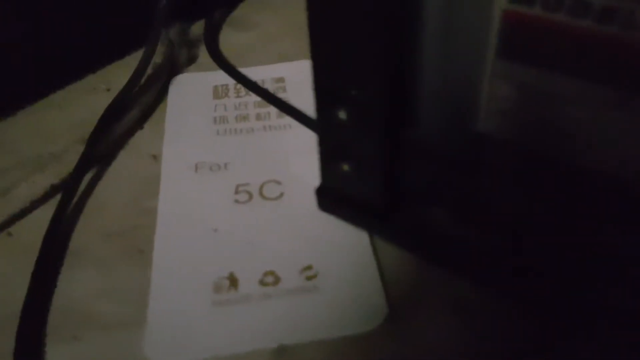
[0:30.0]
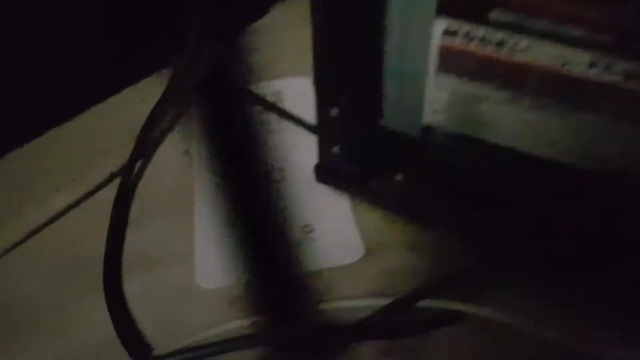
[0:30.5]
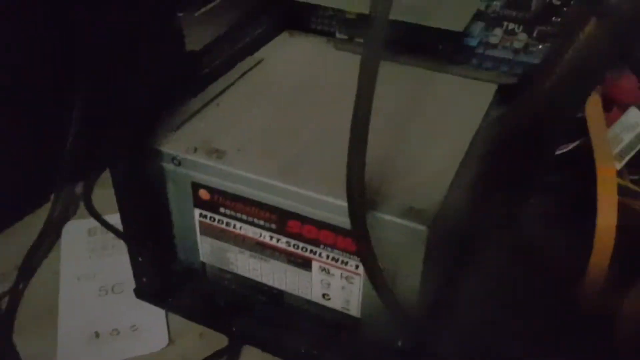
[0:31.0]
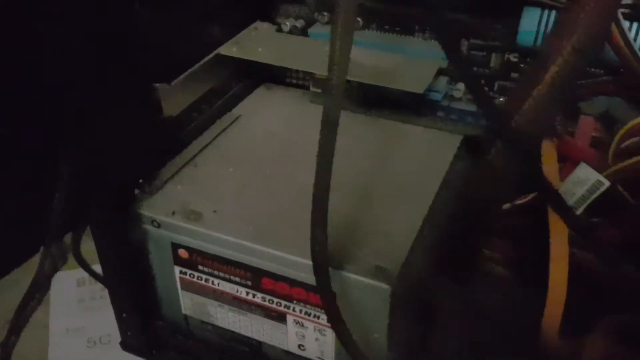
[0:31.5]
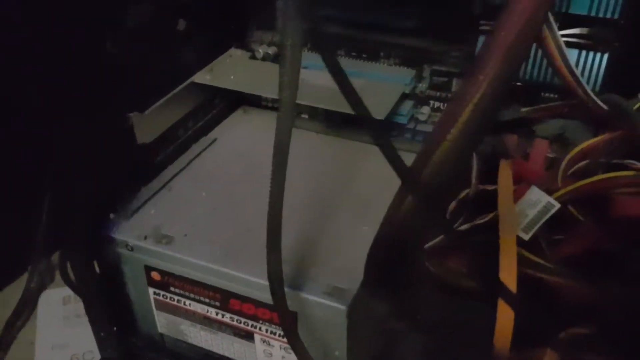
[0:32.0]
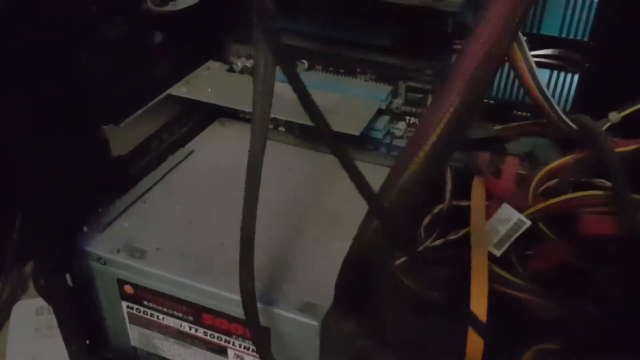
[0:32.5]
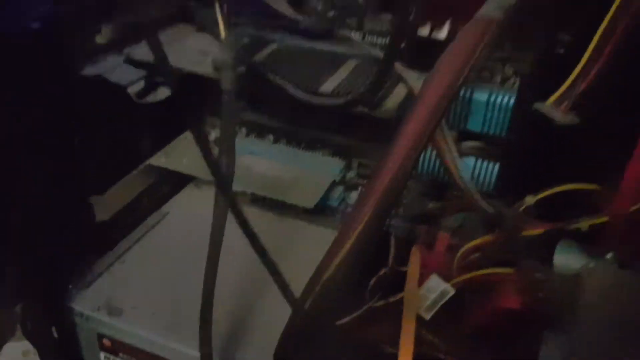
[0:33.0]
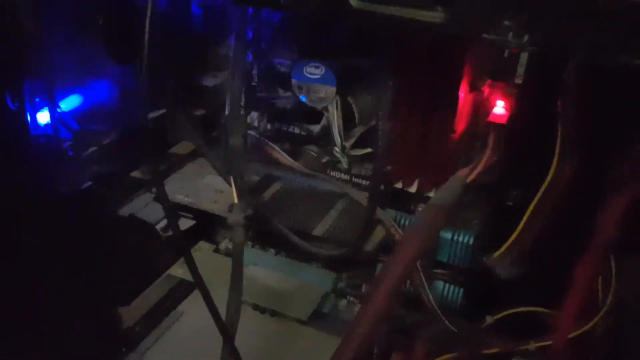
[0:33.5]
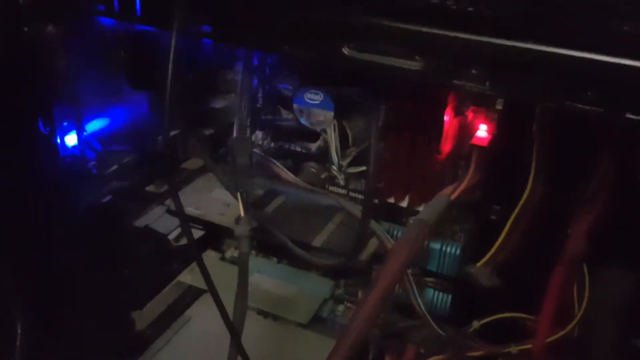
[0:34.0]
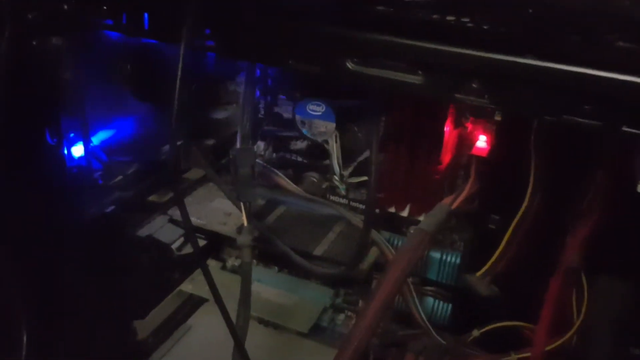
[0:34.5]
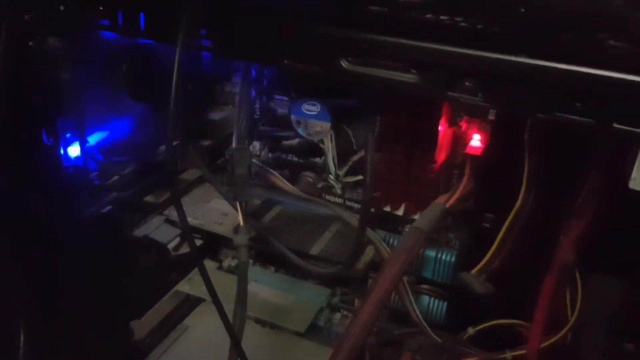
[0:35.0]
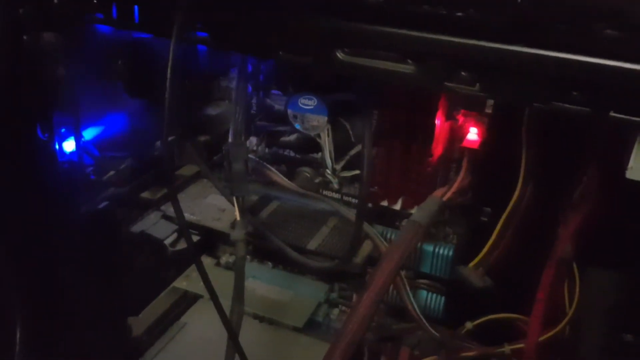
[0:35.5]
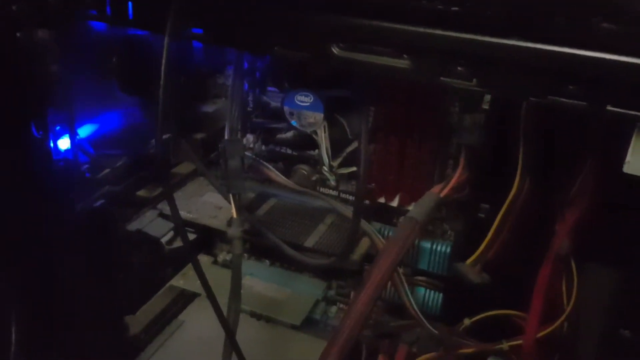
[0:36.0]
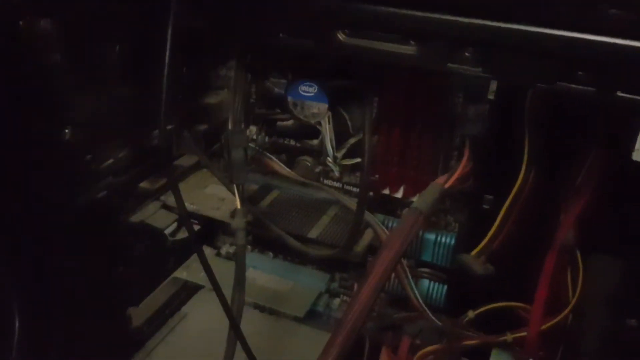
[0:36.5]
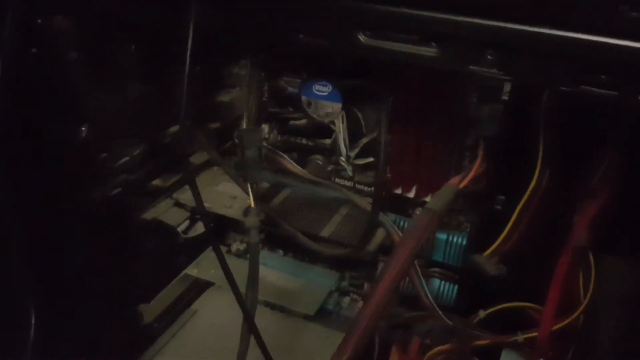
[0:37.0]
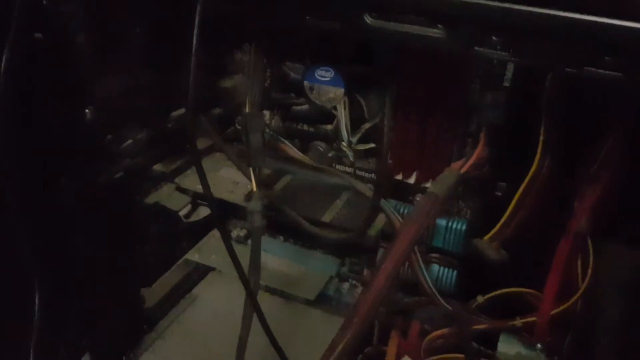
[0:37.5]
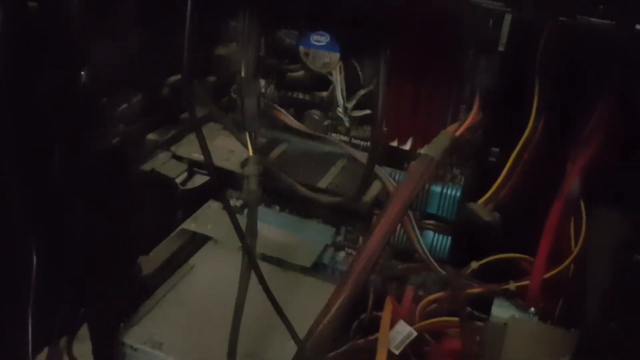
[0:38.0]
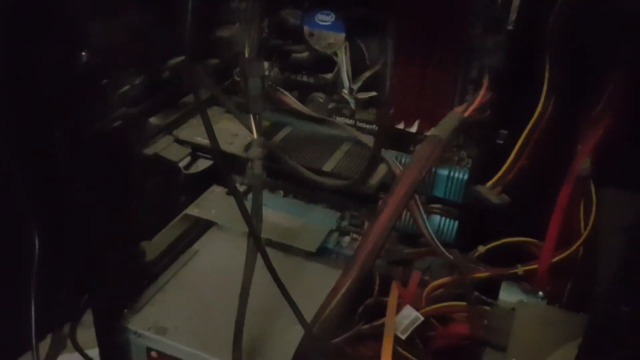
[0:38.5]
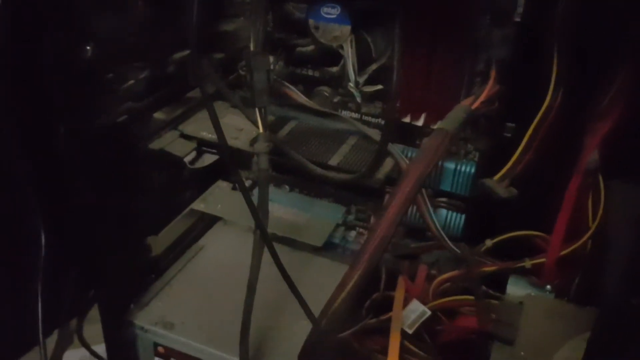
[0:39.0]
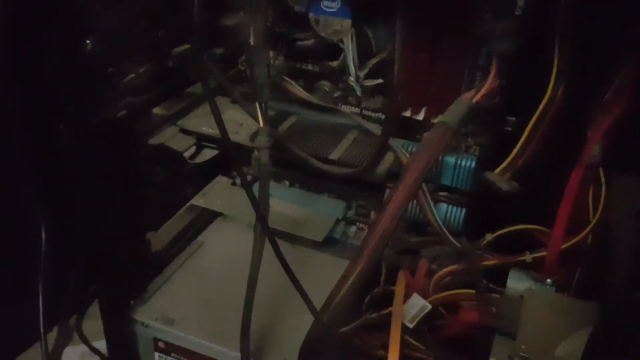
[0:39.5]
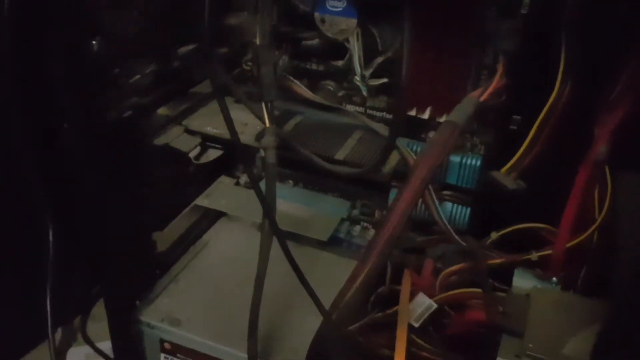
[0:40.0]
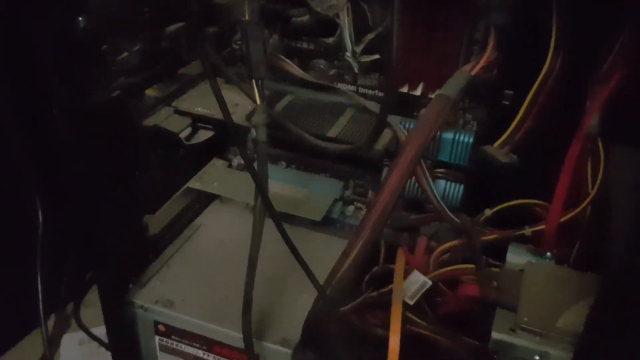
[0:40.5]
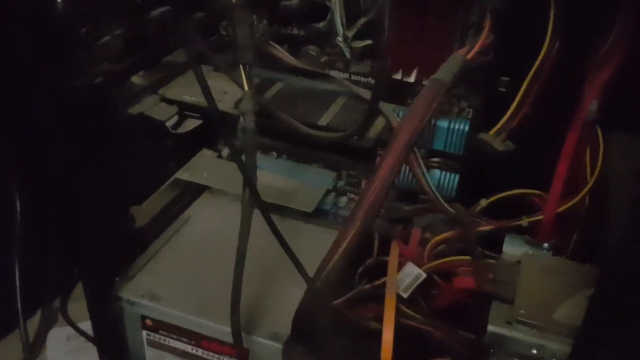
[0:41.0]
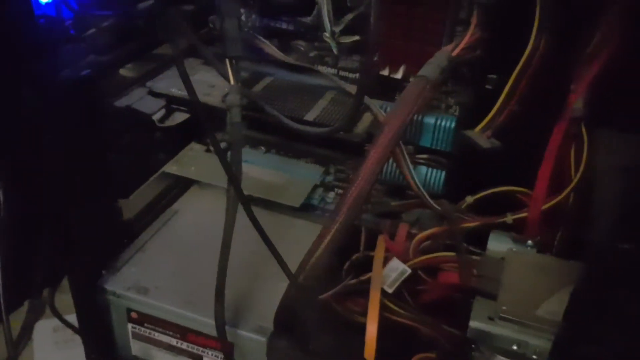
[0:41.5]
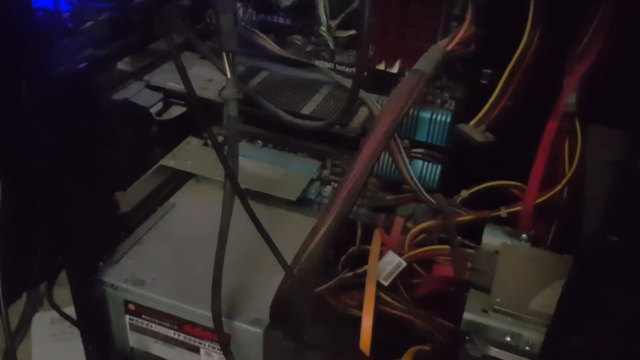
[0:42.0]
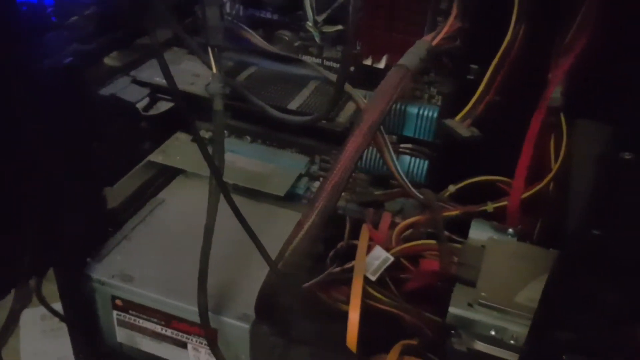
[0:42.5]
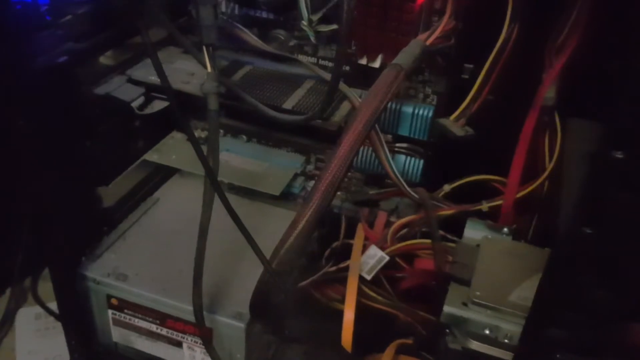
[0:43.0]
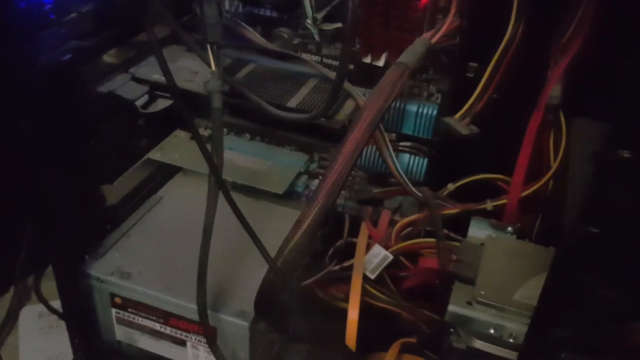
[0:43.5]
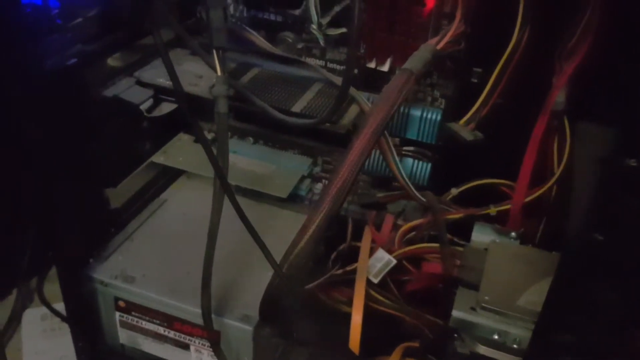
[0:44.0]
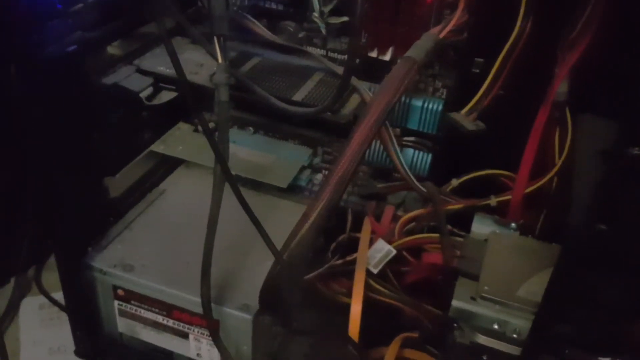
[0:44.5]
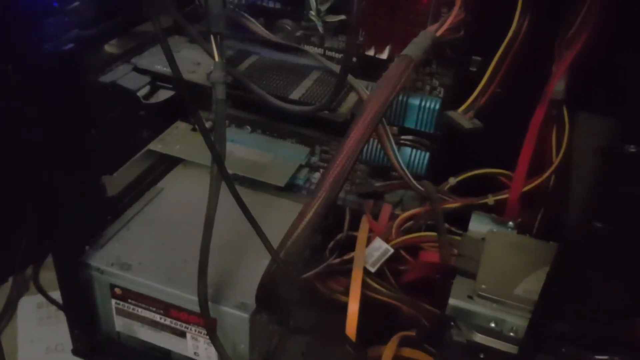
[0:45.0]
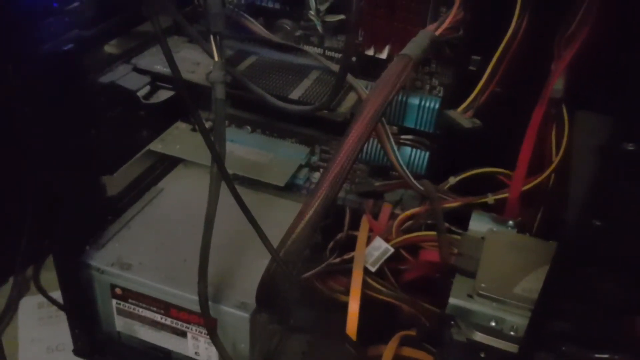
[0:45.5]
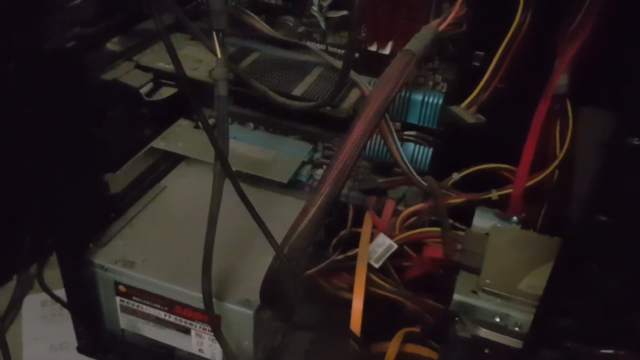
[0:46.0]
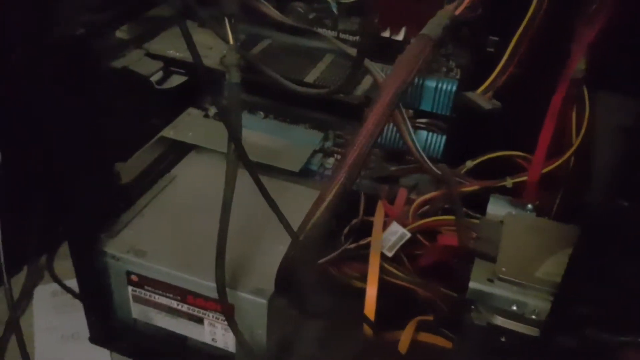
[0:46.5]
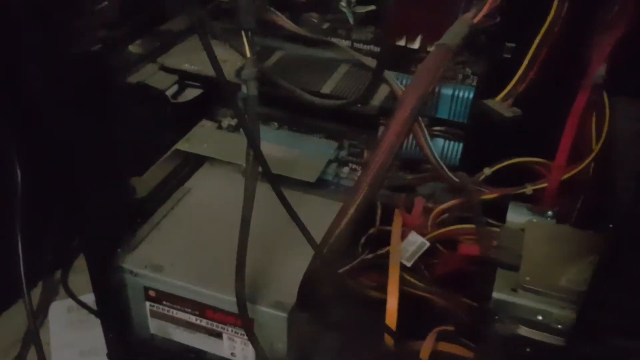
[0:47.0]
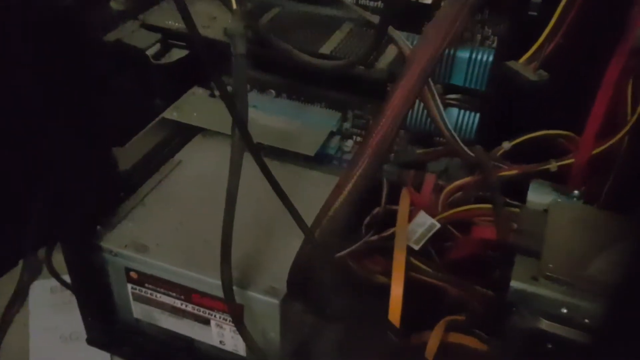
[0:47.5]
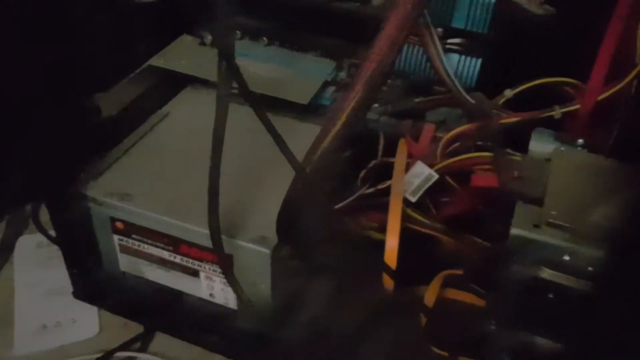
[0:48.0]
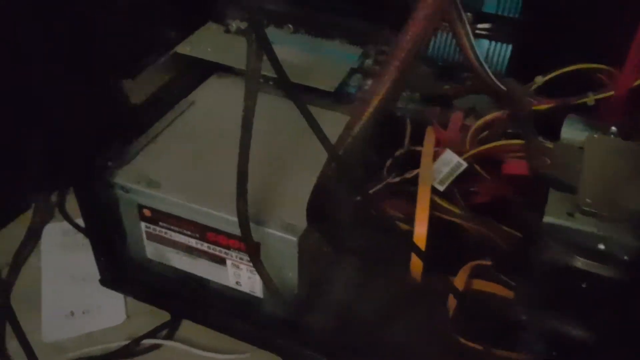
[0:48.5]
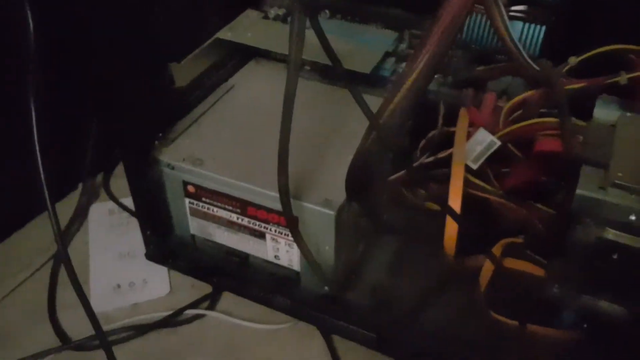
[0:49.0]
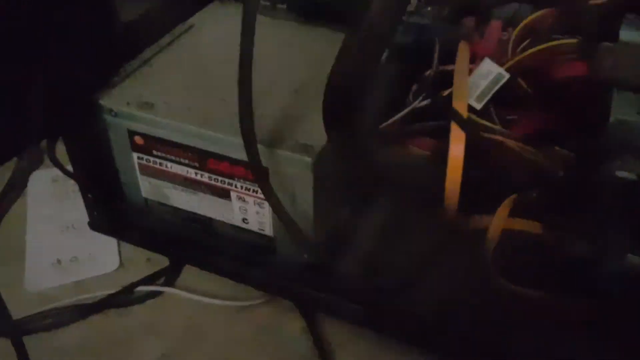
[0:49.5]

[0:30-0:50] The camera zooms back out from a little slip of paper marked "5C" to a wider view of the IT jungle. The computer's fan is visible behind all the cords; it was moving and now is not moving. The camera zooms back in on the hardware, then pulls out again. A bunch of differently colored cords is on the right-hand side, kind of bundled; the hardware is plugged in the middle with the fan above it, and cords are intermingled in between. The shot apparently aims to show that the fan is not moving well, probably because of the mess of cords.